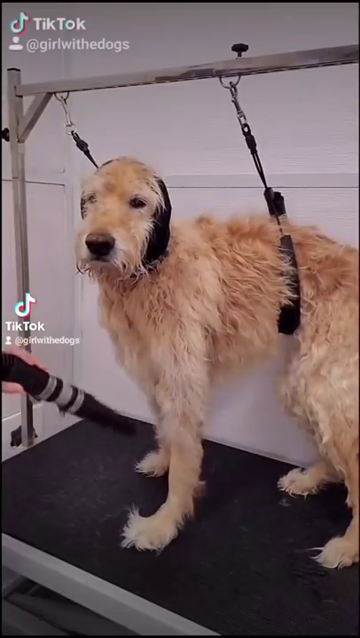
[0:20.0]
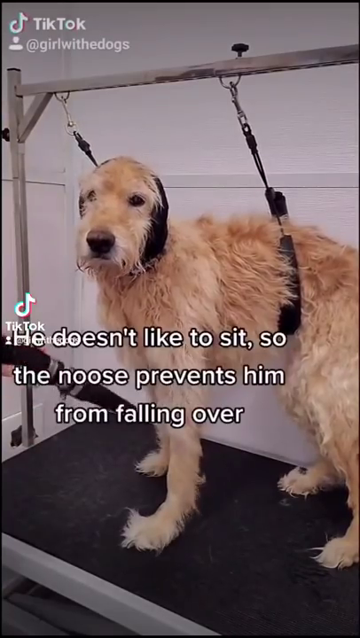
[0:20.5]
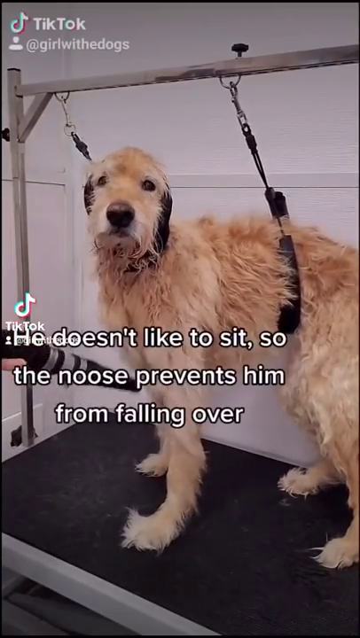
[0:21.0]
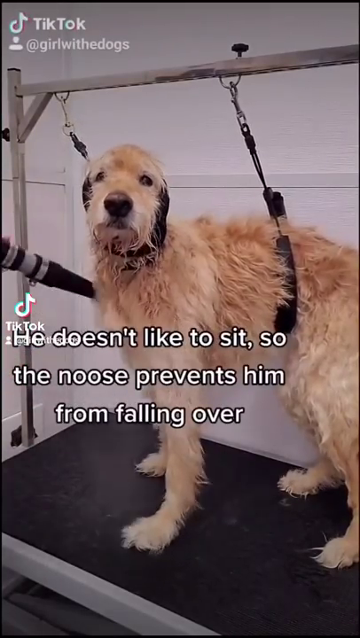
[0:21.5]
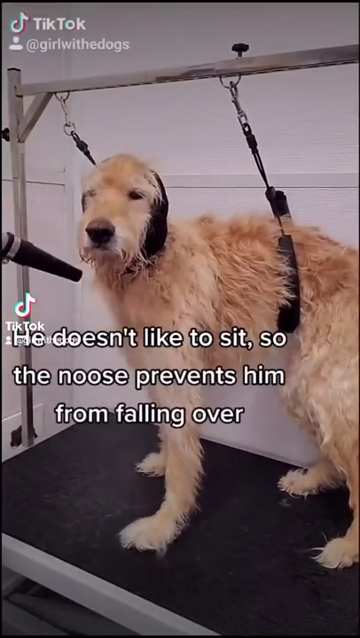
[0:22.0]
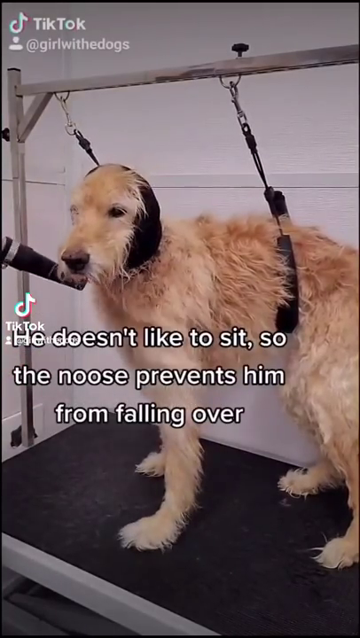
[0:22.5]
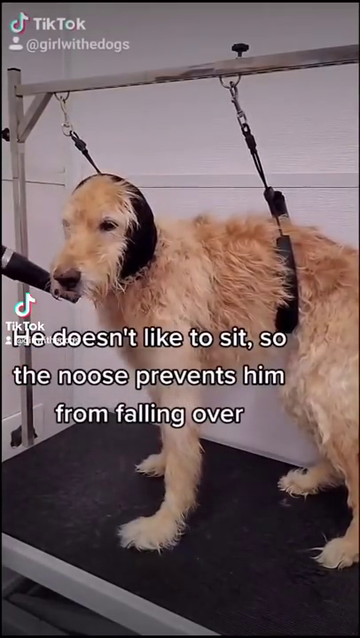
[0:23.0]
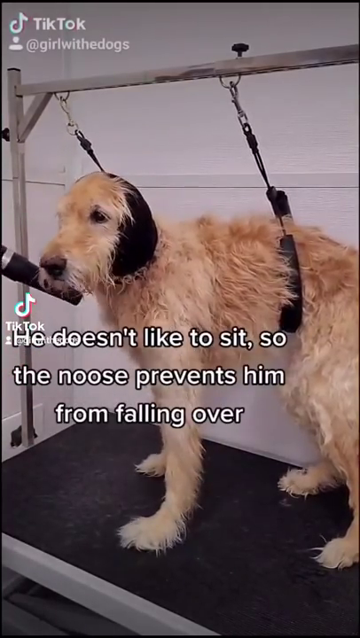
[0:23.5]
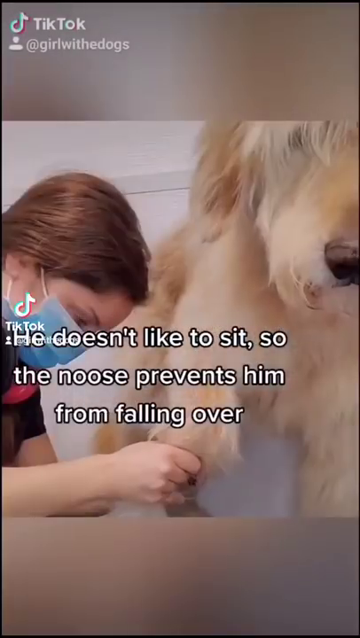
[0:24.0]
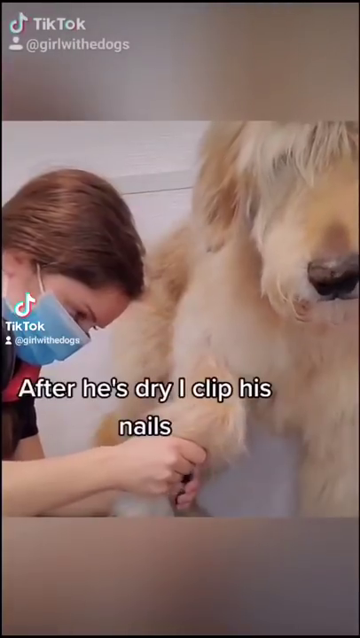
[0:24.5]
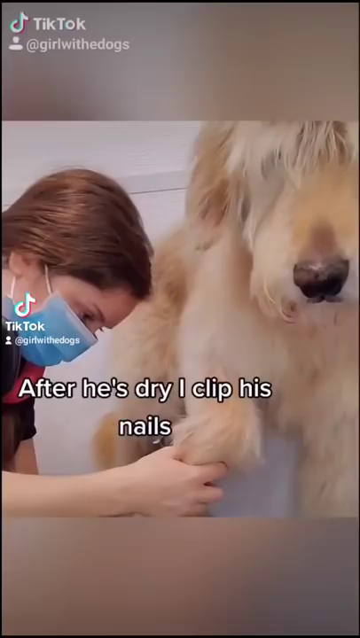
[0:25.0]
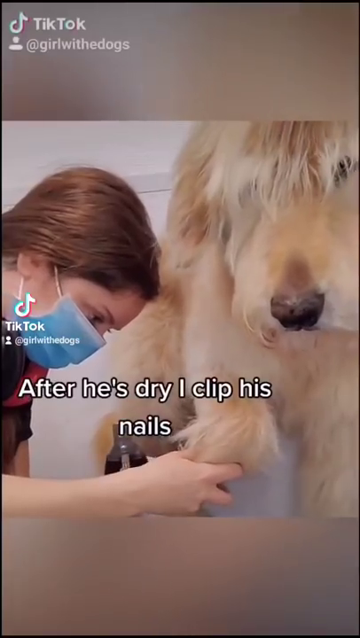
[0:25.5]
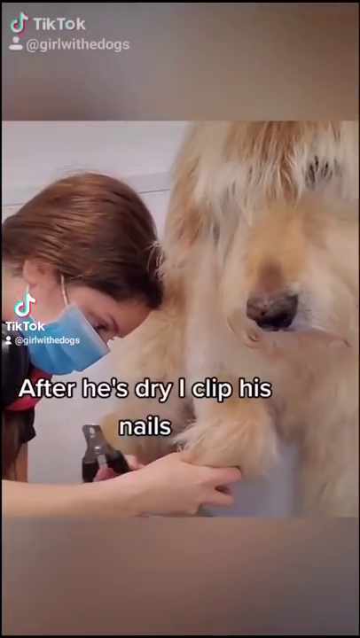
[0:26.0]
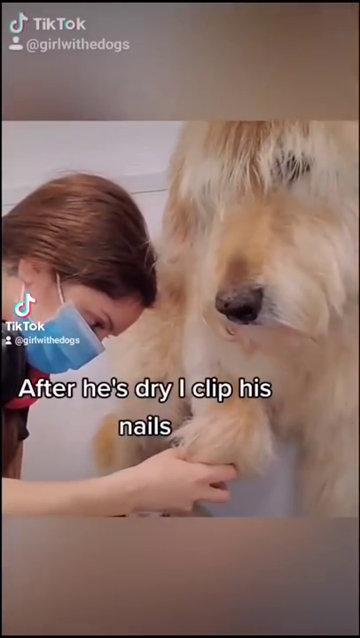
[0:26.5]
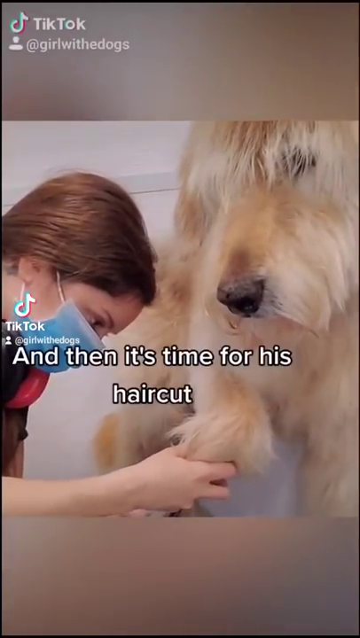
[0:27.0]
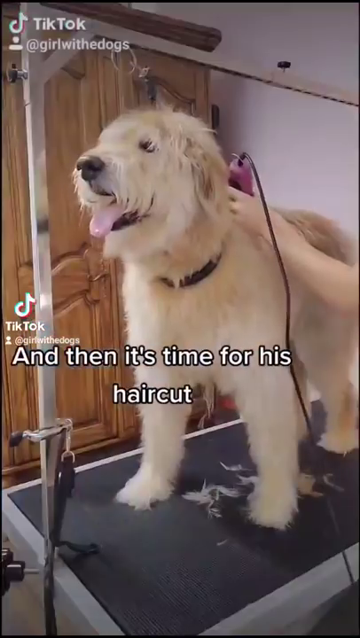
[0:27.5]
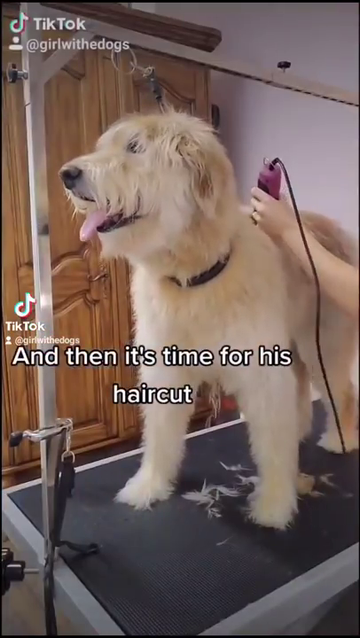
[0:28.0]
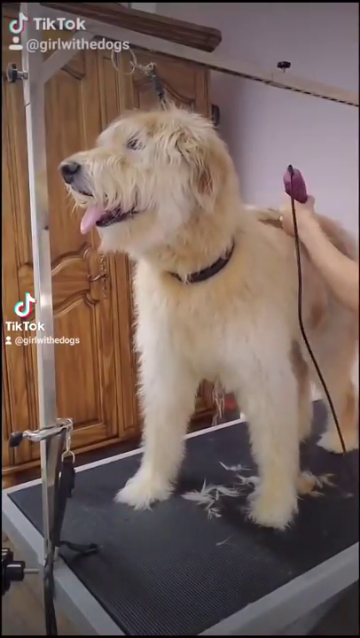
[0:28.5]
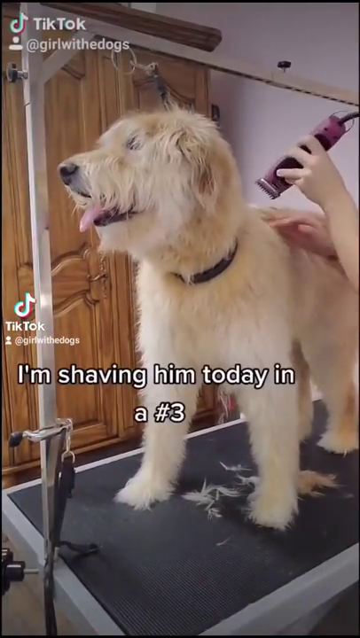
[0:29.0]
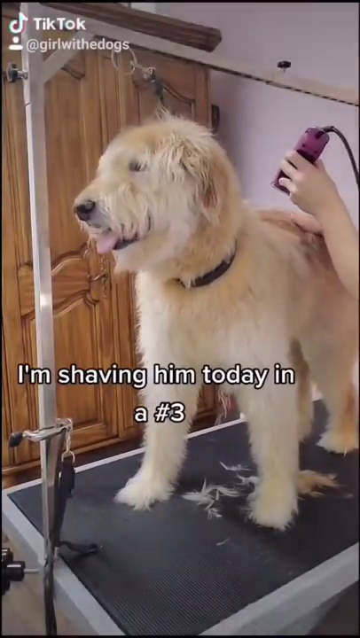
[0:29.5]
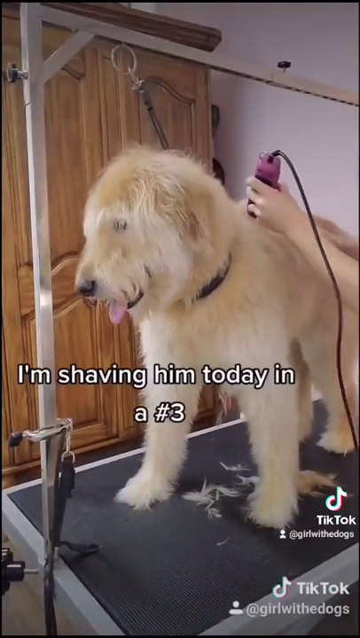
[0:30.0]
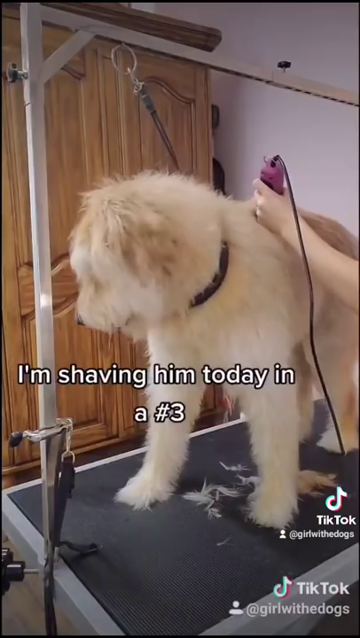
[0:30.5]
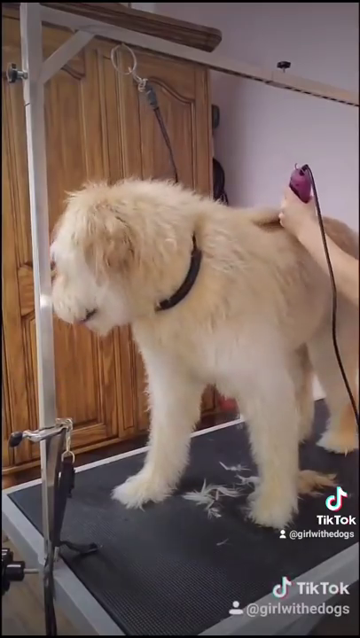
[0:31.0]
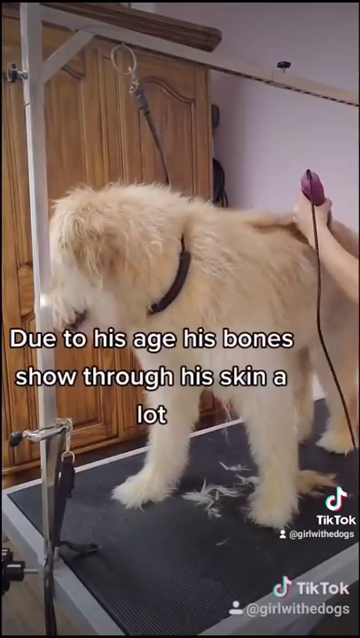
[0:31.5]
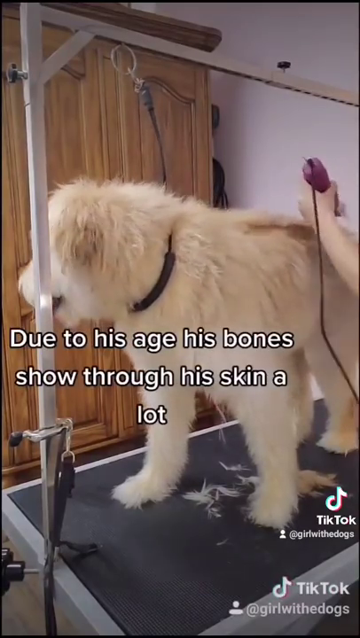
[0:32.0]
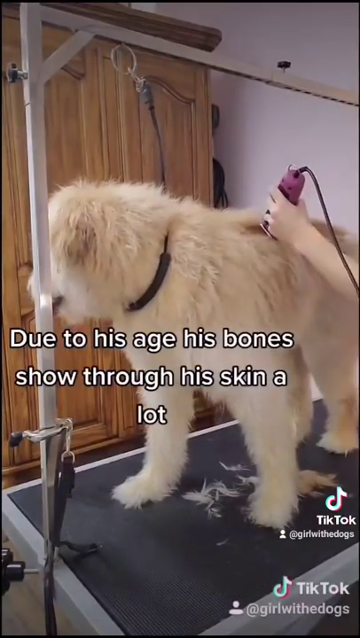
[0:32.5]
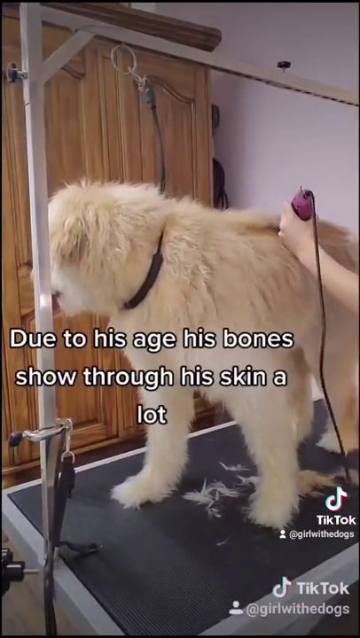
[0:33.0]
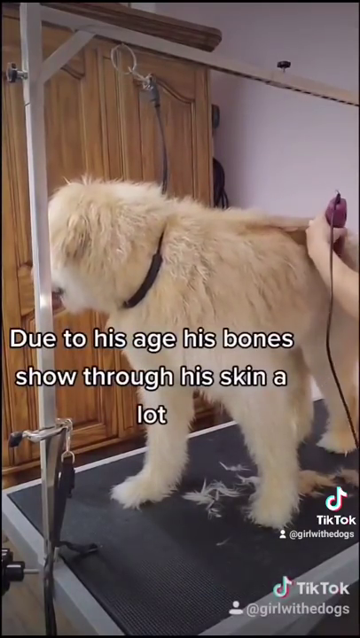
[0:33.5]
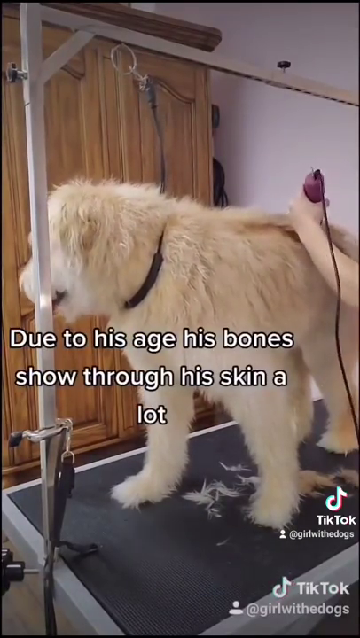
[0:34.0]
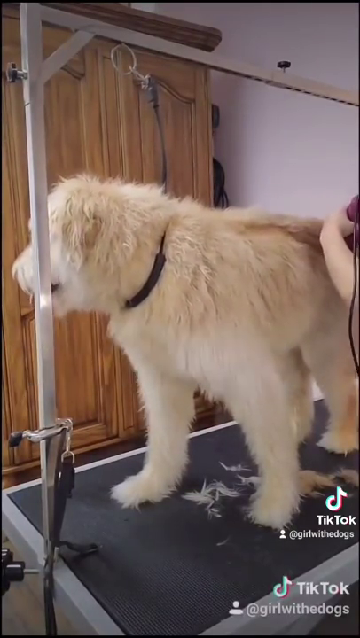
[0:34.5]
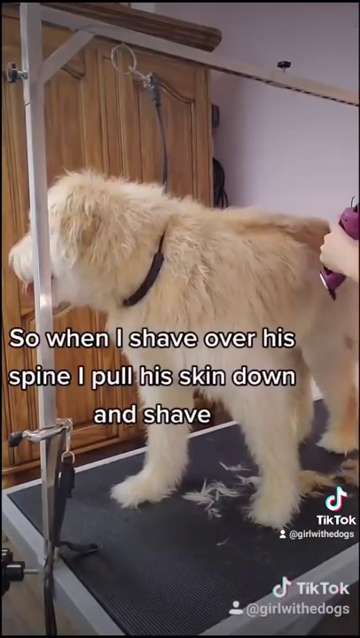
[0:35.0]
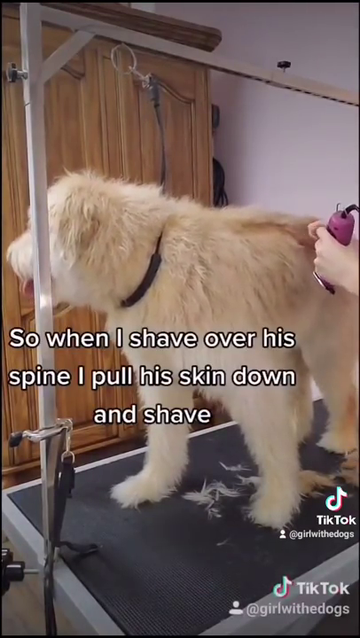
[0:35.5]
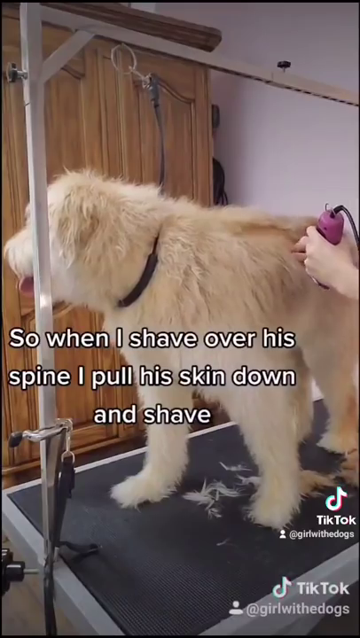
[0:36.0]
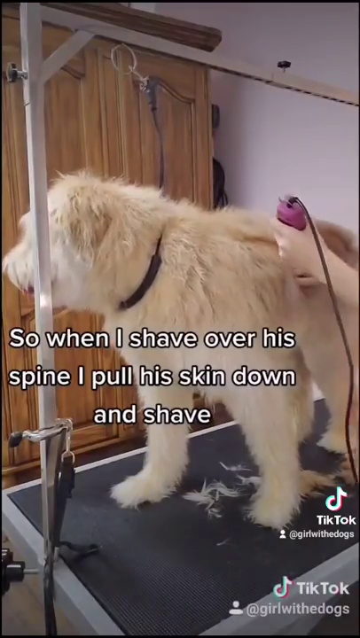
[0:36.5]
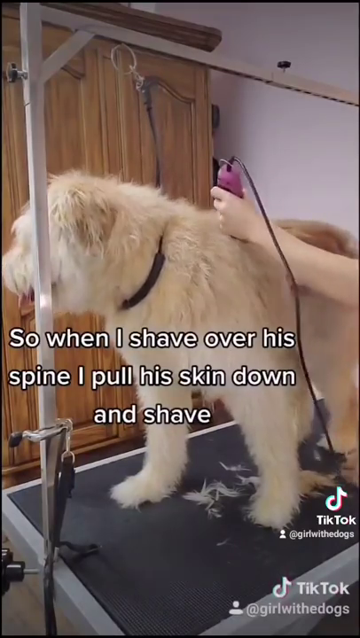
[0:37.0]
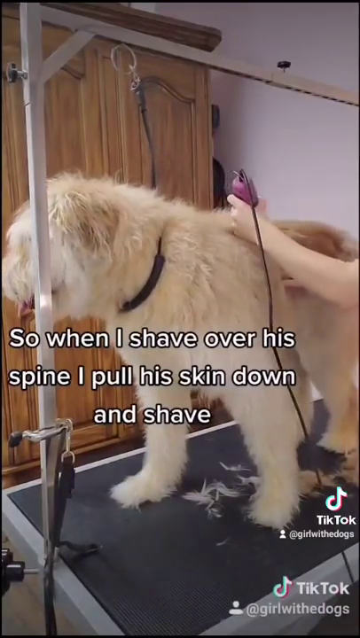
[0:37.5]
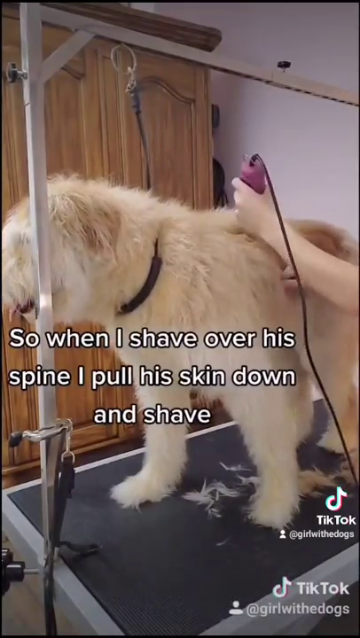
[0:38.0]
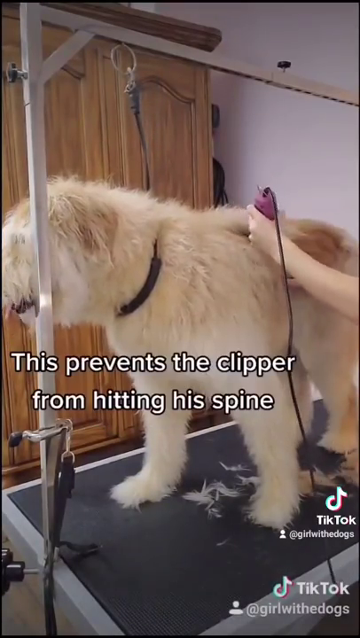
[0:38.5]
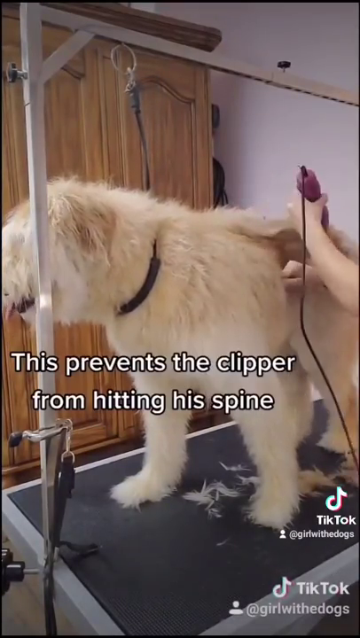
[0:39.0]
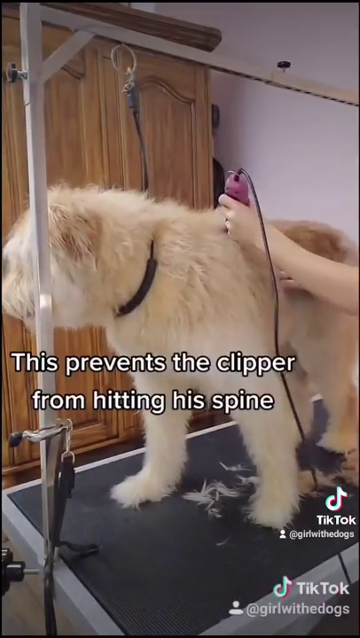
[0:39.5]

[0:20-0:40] This TikTok clip is from the user @girlwiththedogs; the TikTok symbol, the text "TikTok" and the user's handle appear in white text in the top left. A golden doodle is attached to some sort of device that holds him in place, fastened around his head and his waist to keep him still while he is dried off. He has apparently just received a bath or some sort of wash. Toward the center of the screen, white text with a black outline reads "He doesn't like to sit, so the noose prevents him from falling over." To the left, a blow dryer is being used to dry the golden doodle.